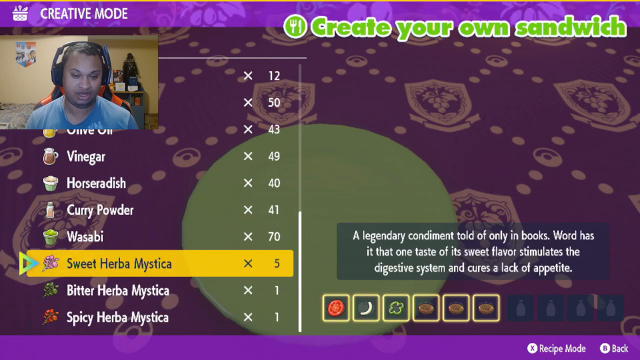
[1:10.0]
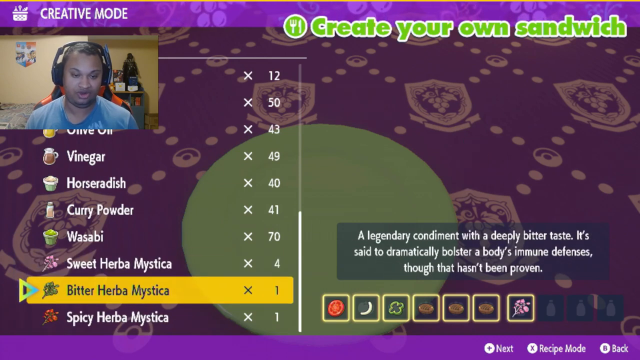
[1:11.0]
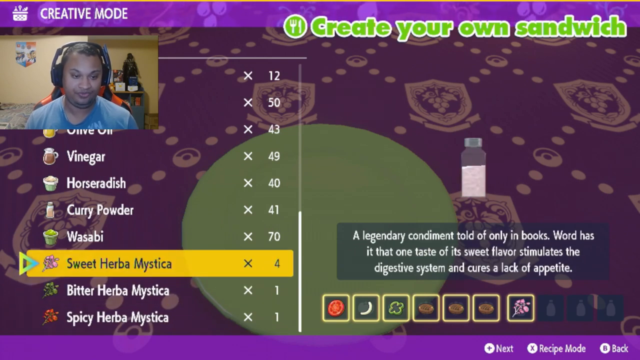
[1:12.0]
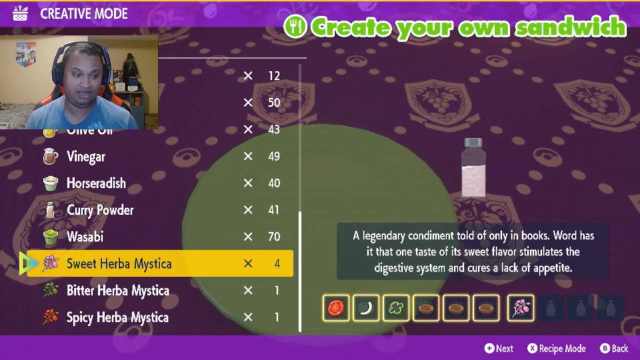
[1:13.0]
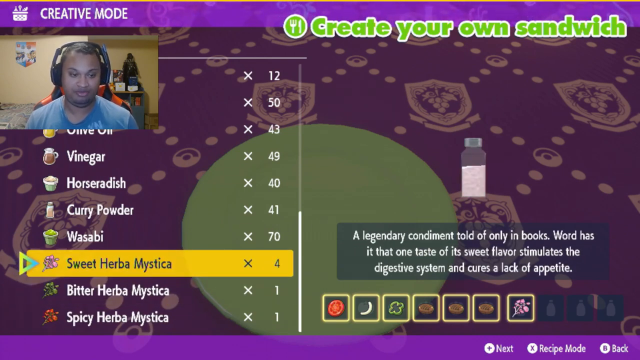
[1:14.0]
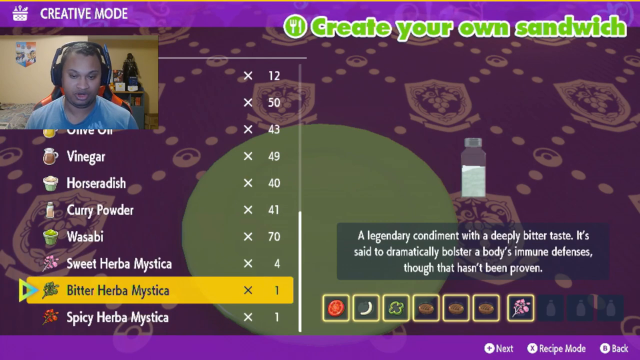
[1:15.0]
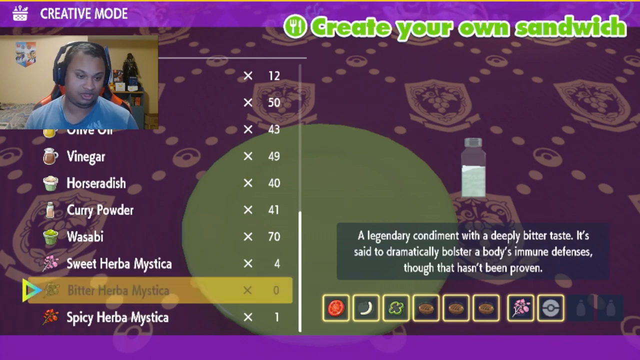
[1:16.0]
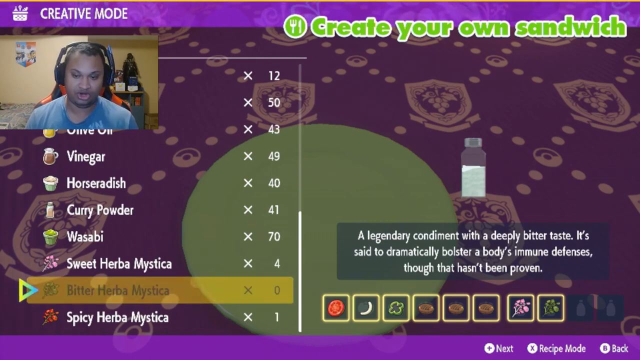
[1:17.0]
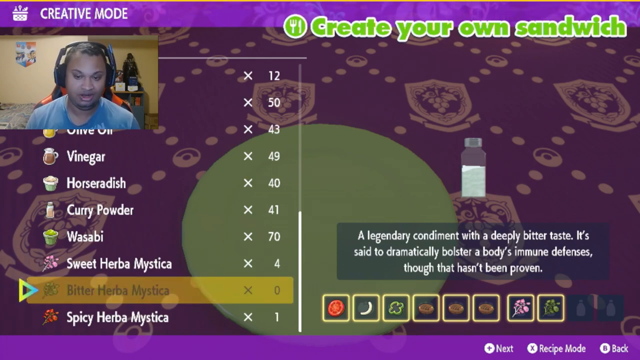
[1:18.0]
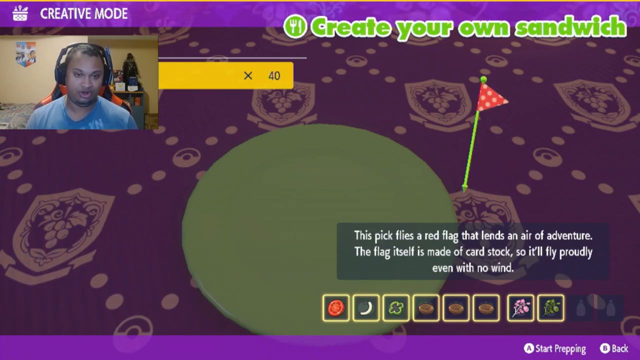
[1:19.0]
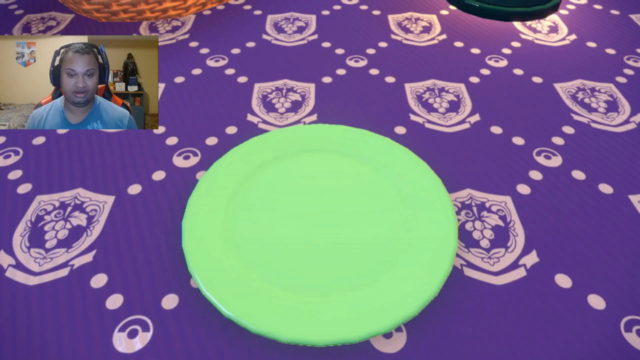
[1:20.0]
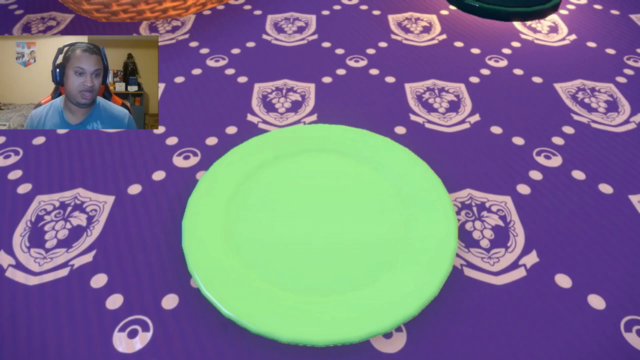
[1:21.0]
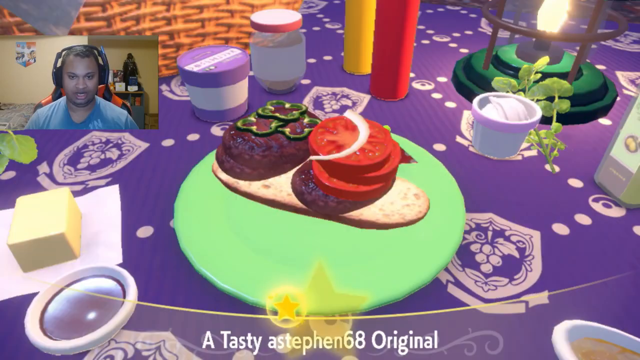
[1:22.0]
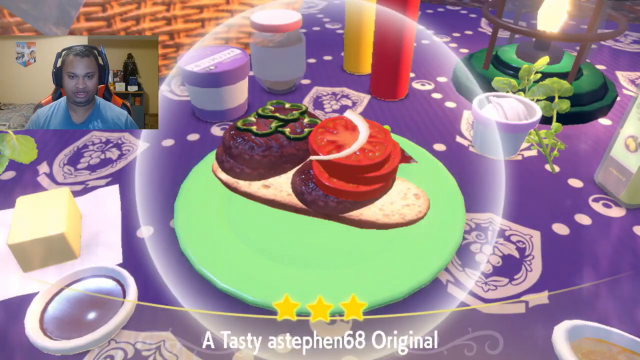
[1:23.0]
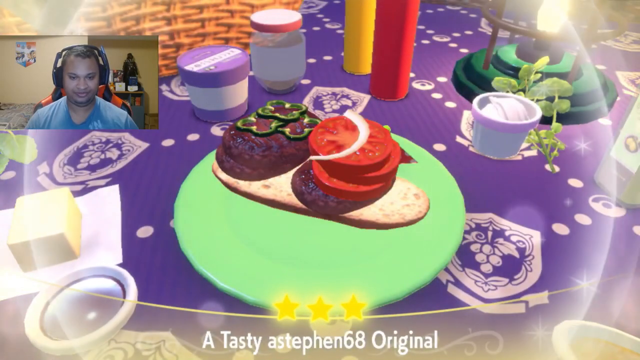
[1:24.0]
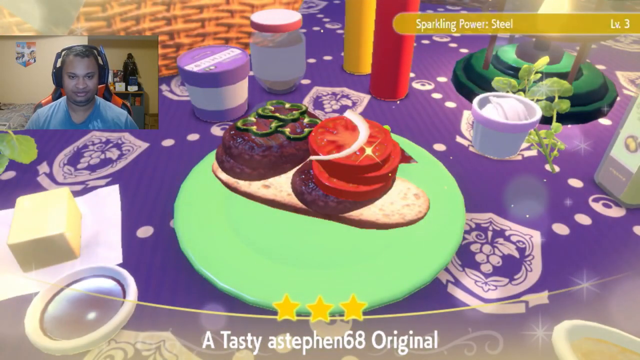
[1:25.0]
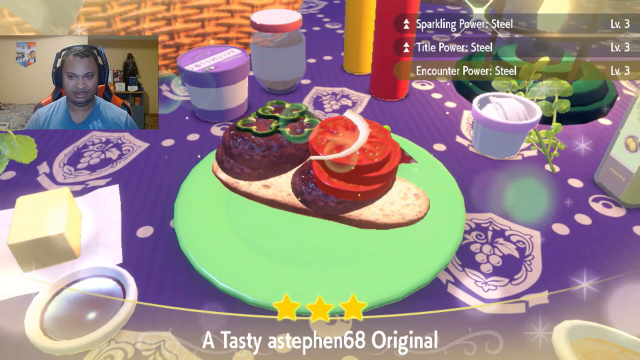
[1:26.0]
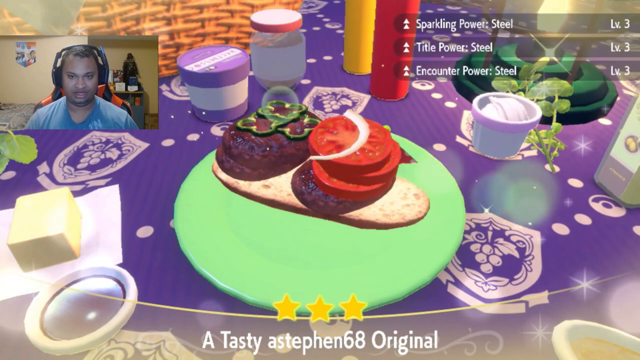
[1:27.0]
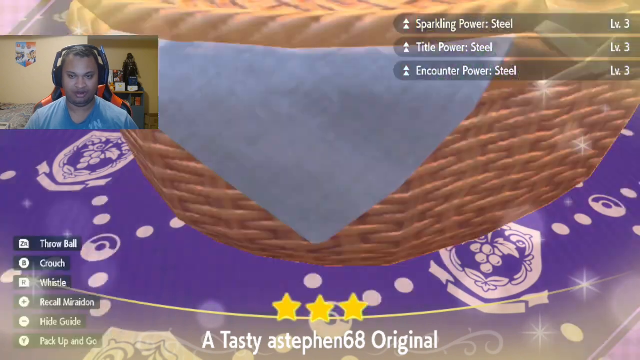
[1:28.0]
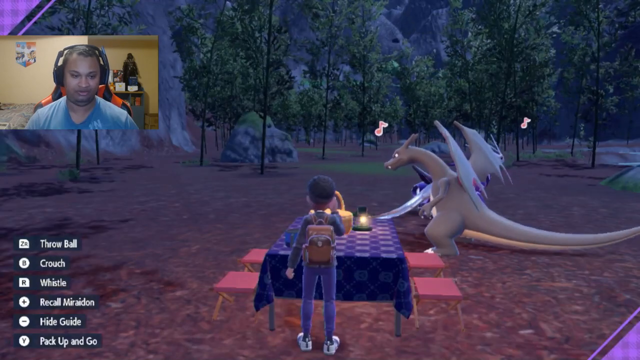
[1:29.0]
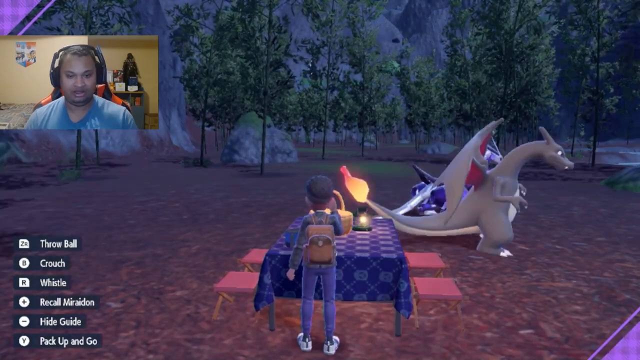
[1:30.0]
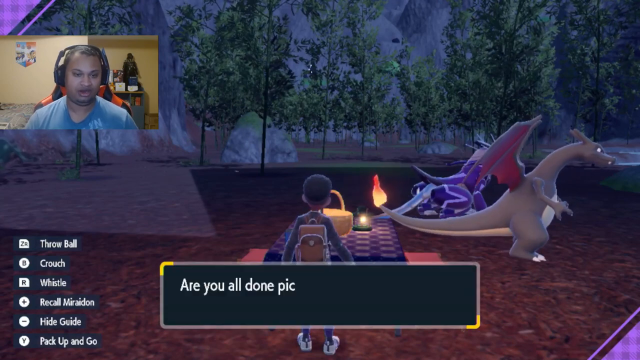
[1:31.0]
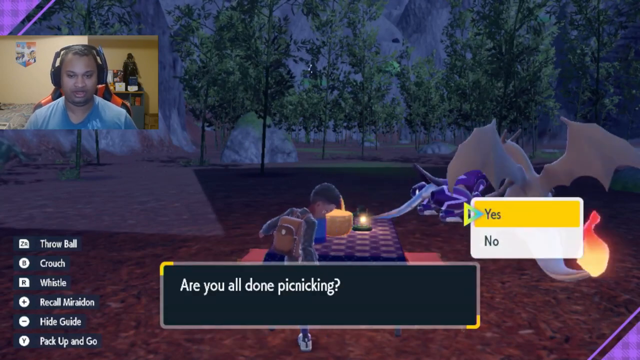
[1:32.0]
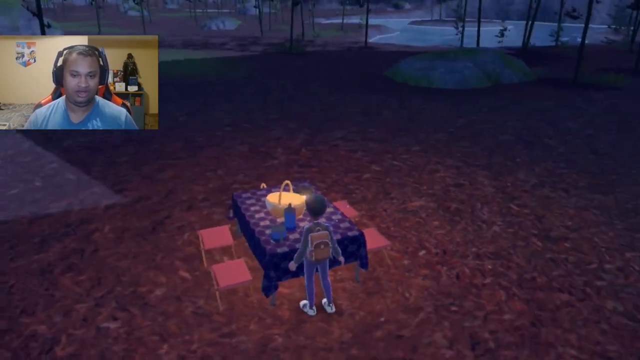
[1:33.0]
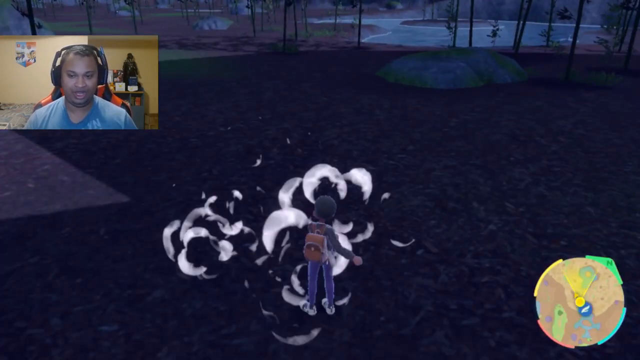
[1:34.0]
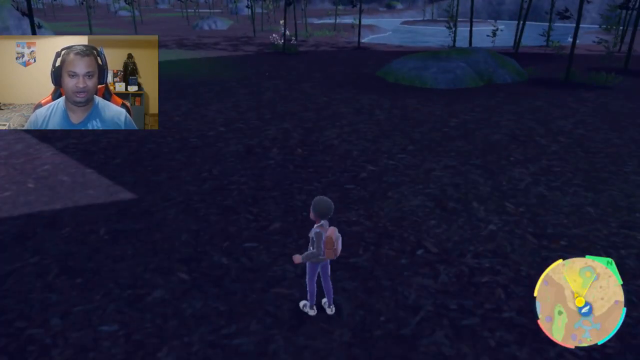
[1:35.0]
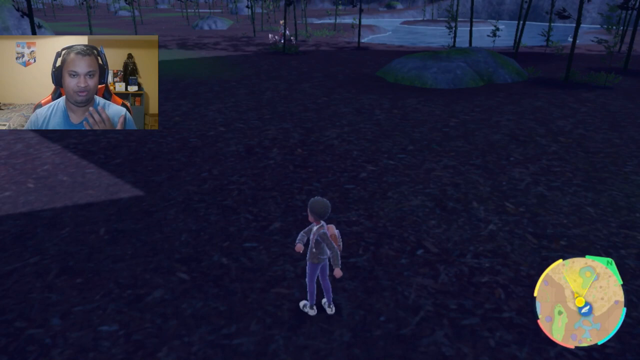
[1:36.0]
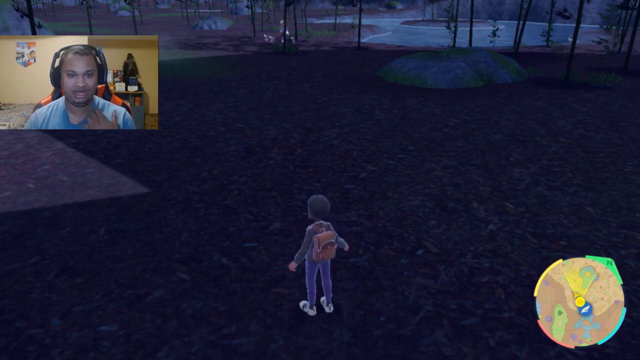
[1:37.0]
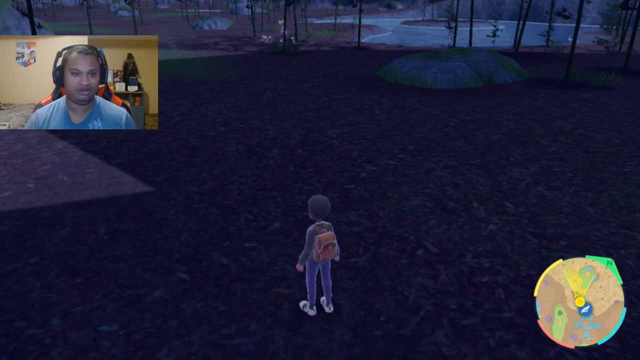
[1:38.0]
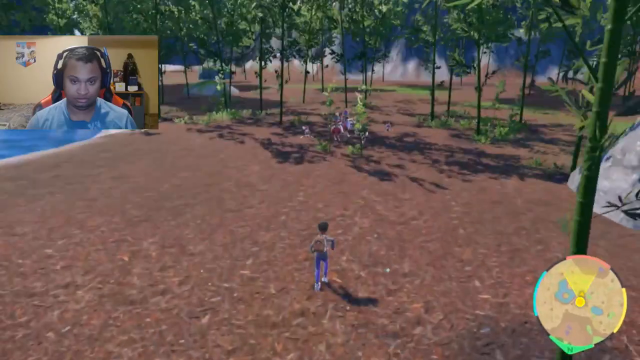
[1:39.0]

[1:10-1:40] The host continues going through menu options to curate the meal and appears to finalize his choices. The screen says he has created a tasty original, which looks like an open-faced burger with lettuce and onions, and text on the screen says the avatar is done picking. The picnic table and the dragon disappear, and he summons something like a magic bubble that transports him to a different area of the park. The picnic table menu then appears, showing the big sandwich he made, which looks like it has a yogurt sauce on the side and some green pepper toppings. The table also appears to hold something like a cup of yogurt, a drink or a salad dressing, plus ketchup and mustard. The picnic ends, and the dragon, which has a flame on the end of its tail, is sort of stomping around looking irritated or bored. The boy seems to have made a sandwich that satisfied the Pokemon, so it goes away.